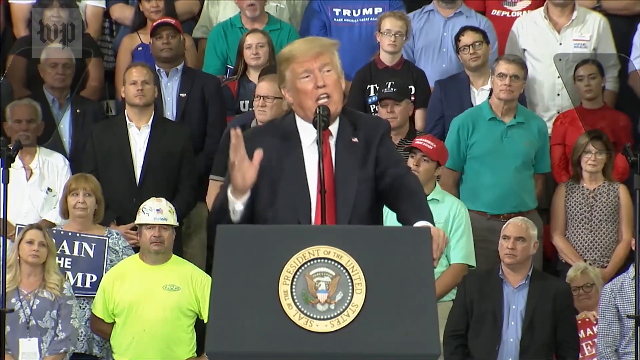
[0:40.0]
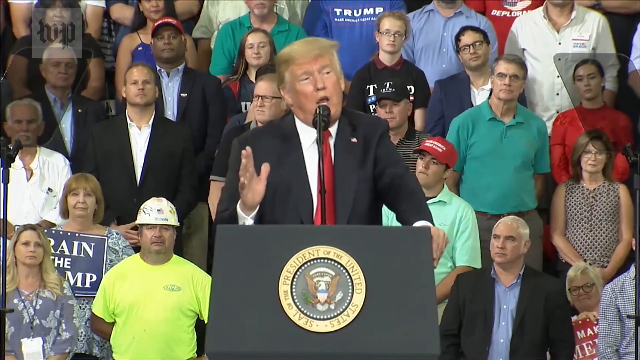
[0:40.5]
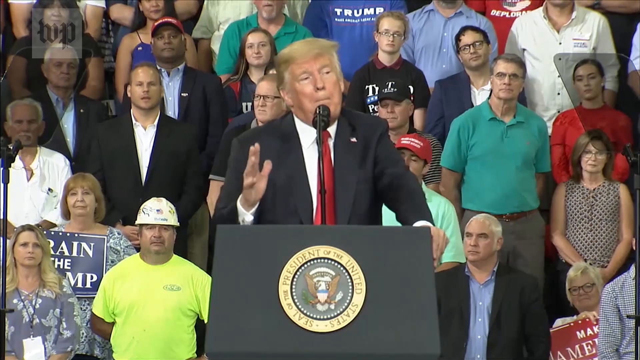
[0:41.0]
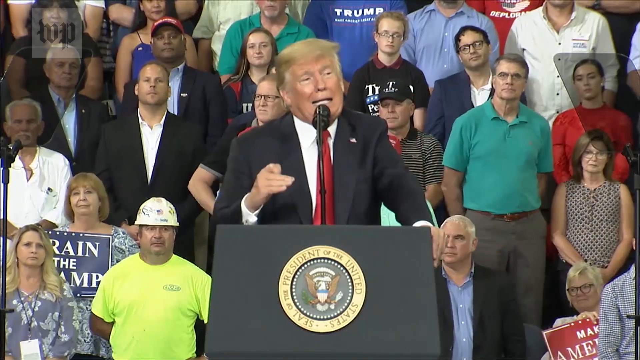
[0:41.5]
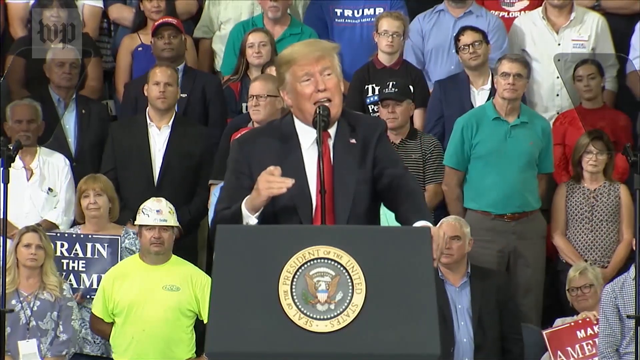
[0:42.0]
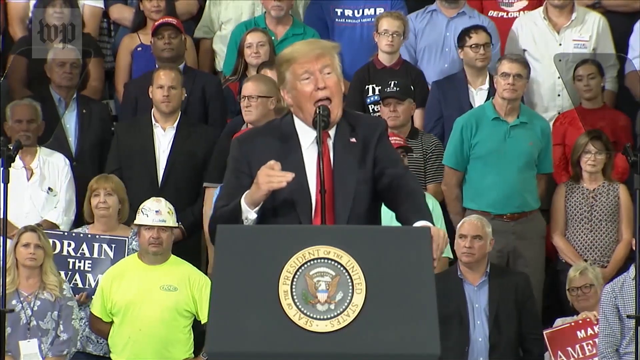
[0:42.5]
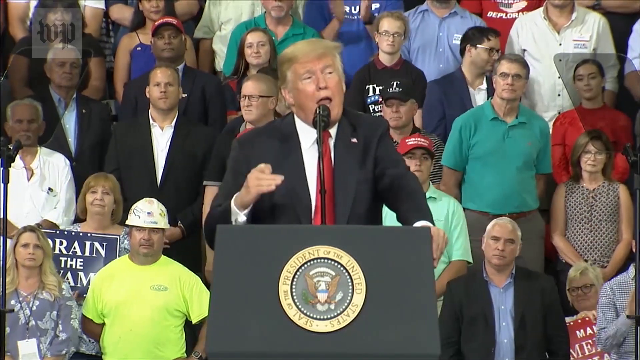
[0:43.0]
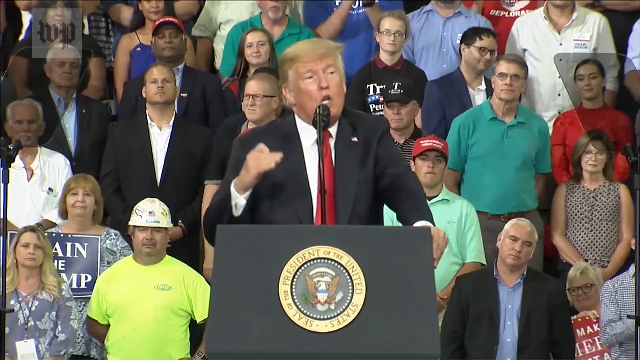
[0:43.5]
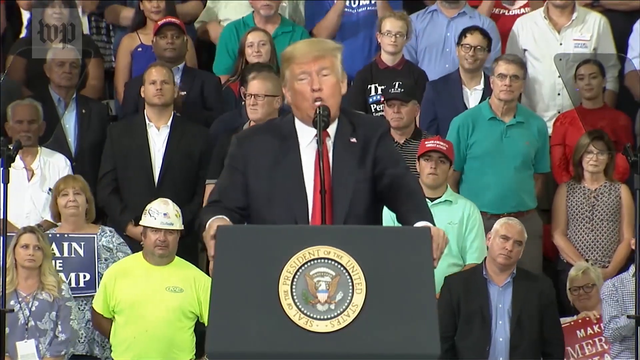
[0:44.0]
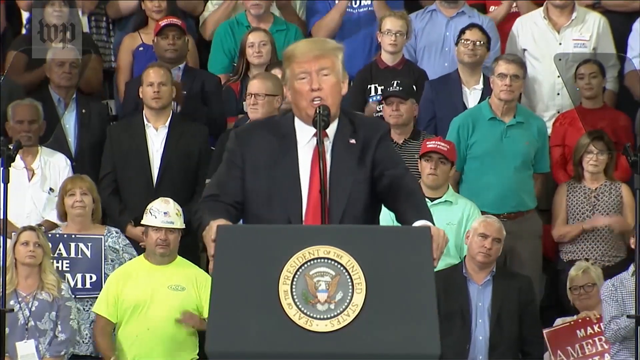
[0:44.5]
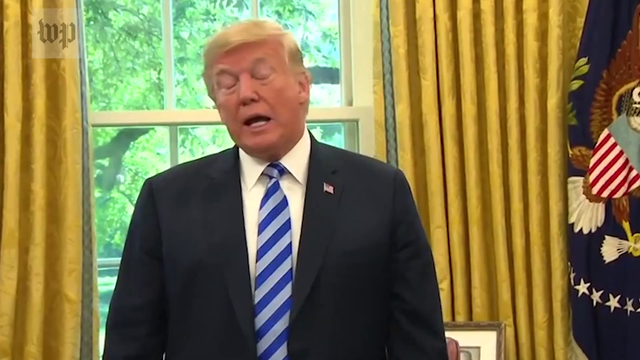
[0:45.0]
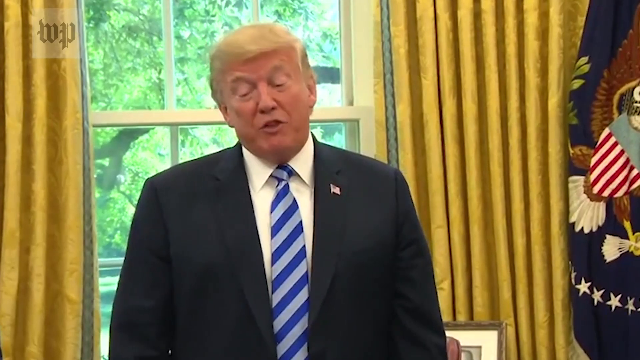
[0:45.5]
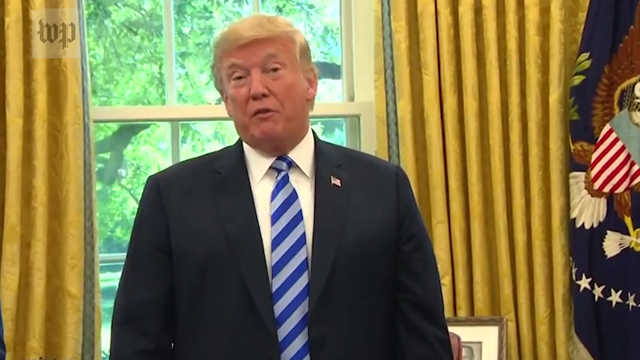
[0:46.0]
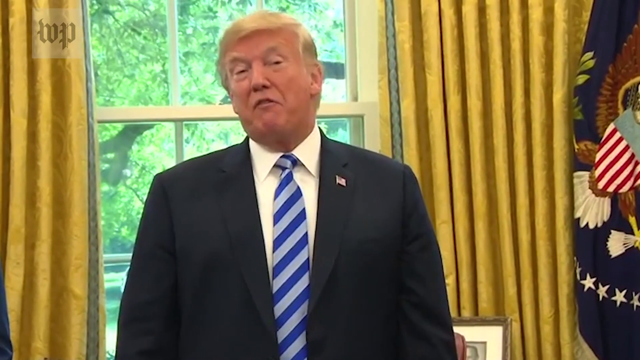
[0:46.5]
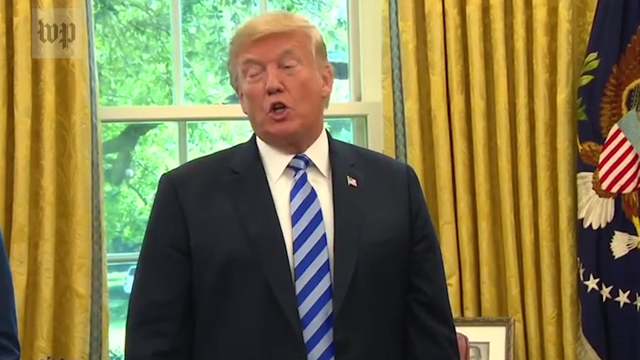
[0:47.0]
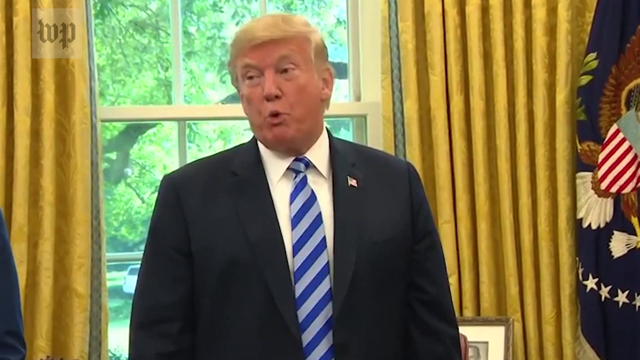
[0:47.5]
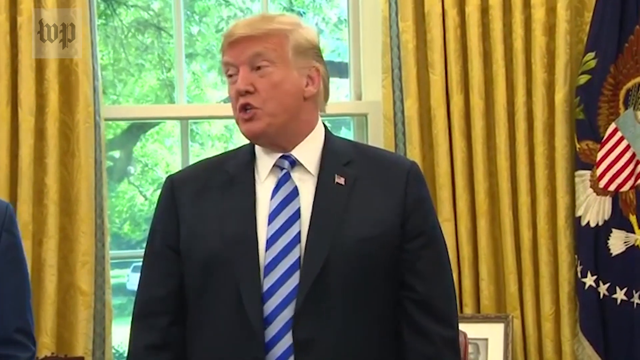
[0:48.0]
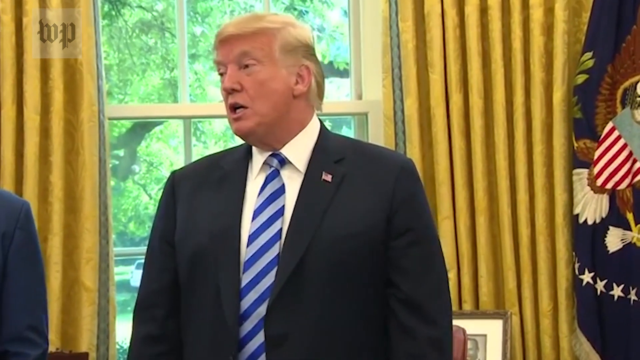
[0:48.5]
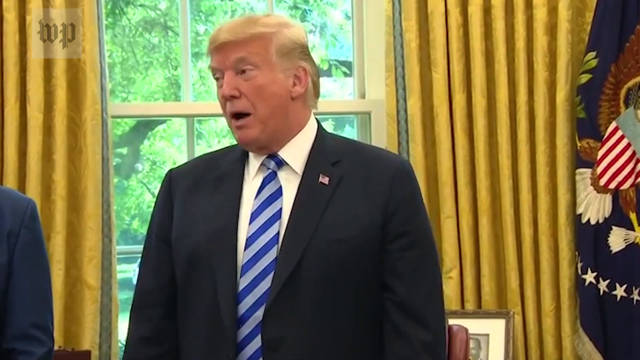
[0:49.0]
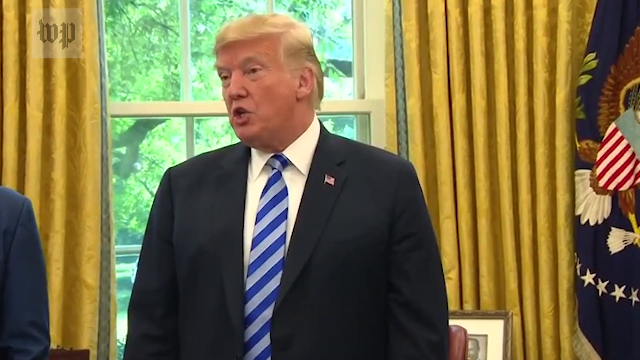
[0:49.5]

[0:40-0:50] Trump continues his speech, addressing the crowd and making gestures with his hands. About 24 people are visible standing behind him. One of the women behind him holds a card up, and it possibly looks as if it has rained, though this is uncertain.